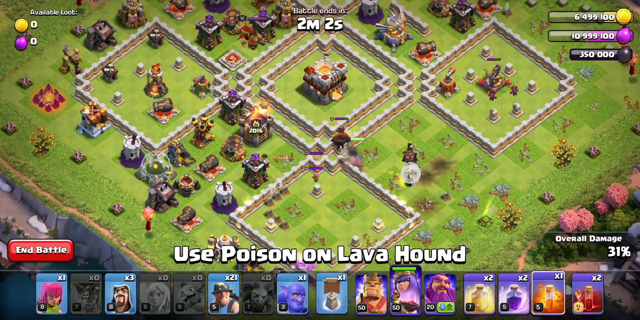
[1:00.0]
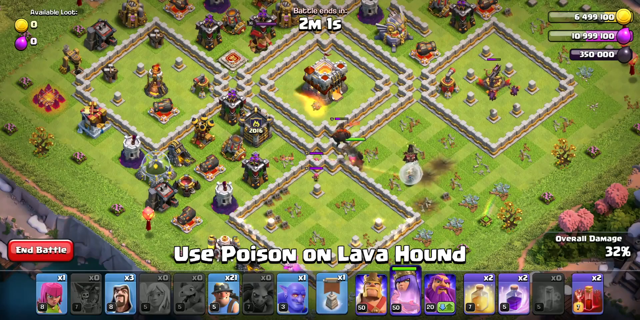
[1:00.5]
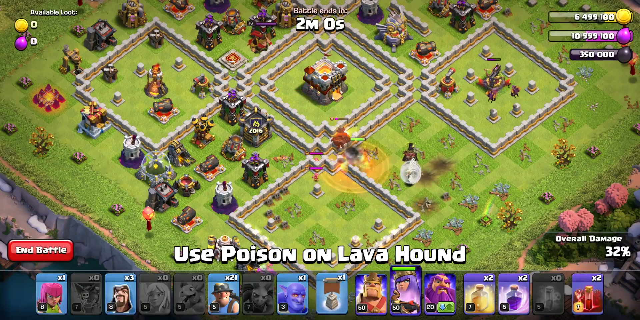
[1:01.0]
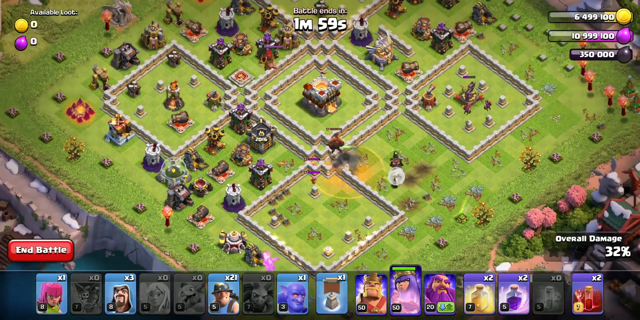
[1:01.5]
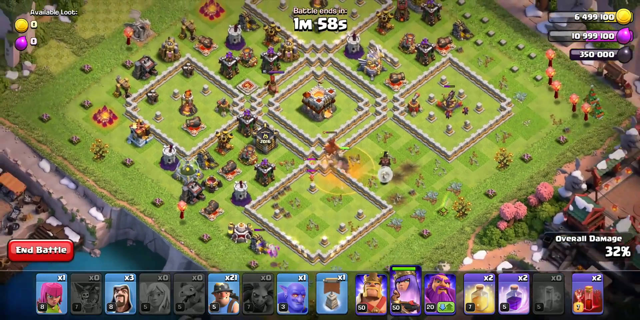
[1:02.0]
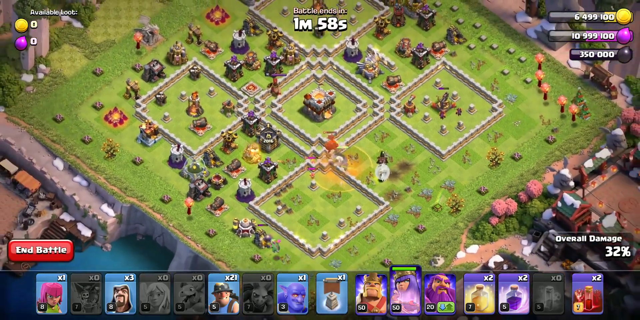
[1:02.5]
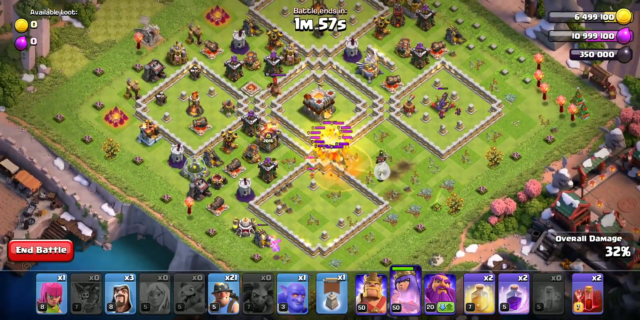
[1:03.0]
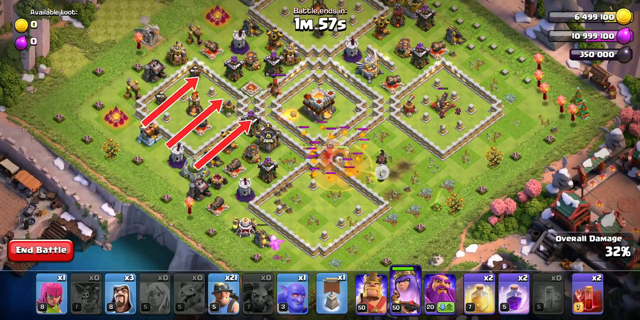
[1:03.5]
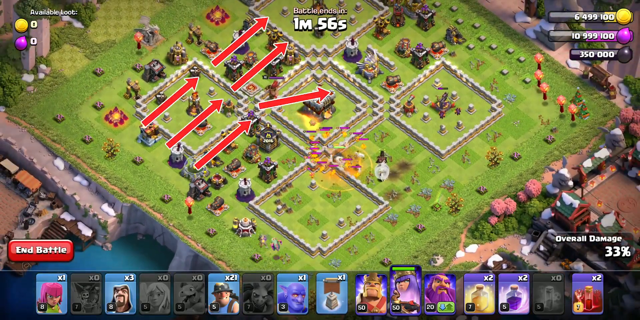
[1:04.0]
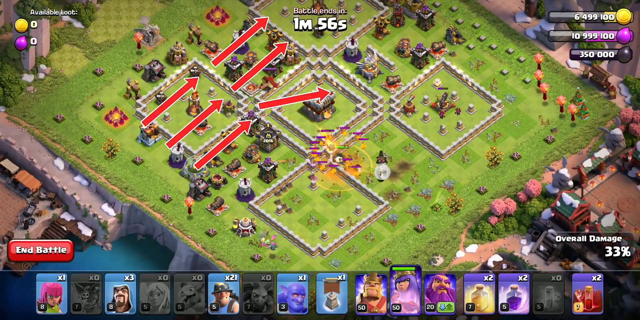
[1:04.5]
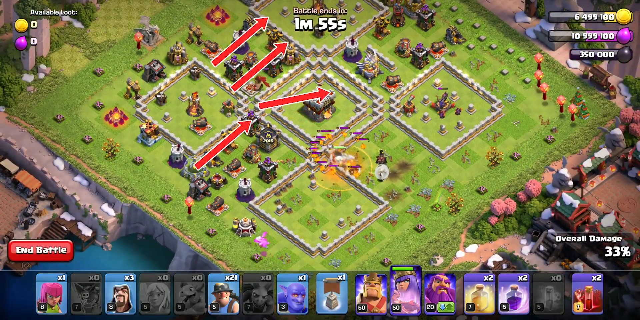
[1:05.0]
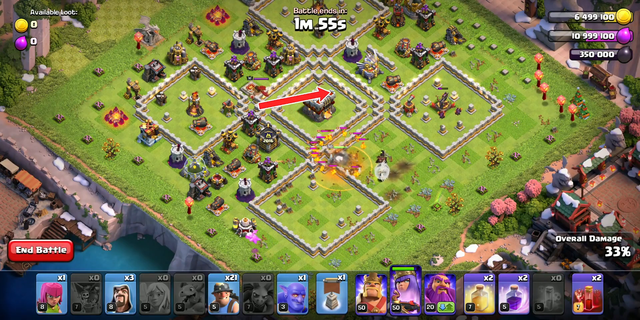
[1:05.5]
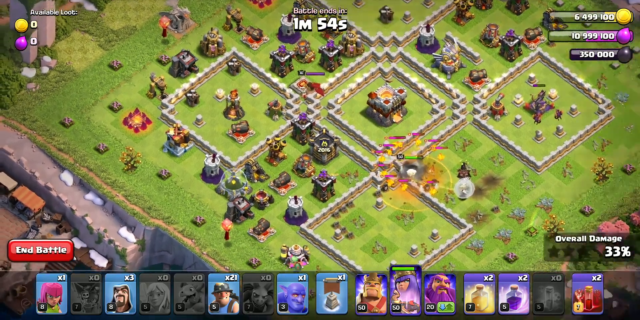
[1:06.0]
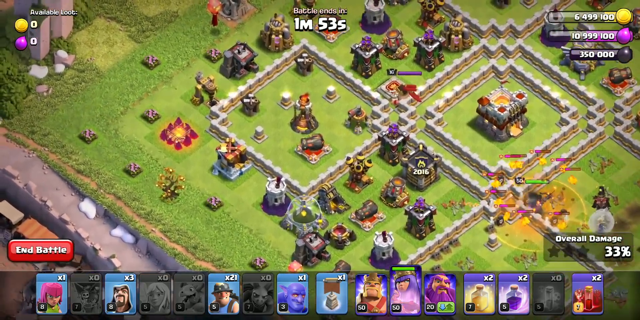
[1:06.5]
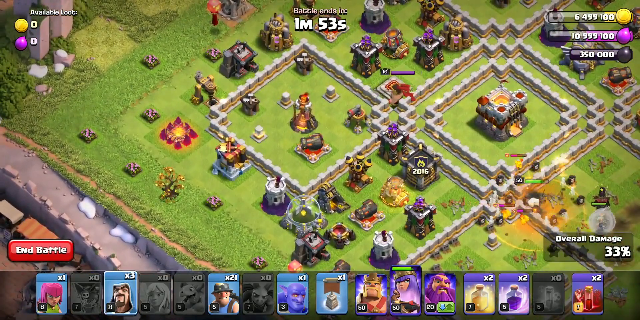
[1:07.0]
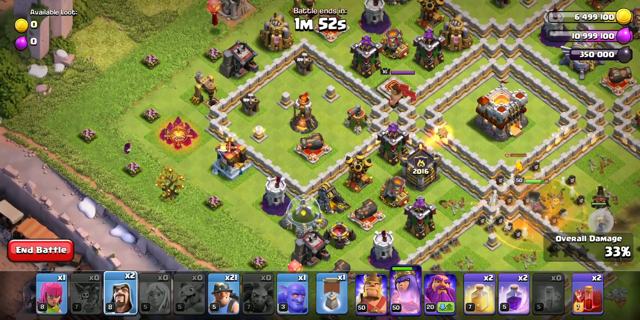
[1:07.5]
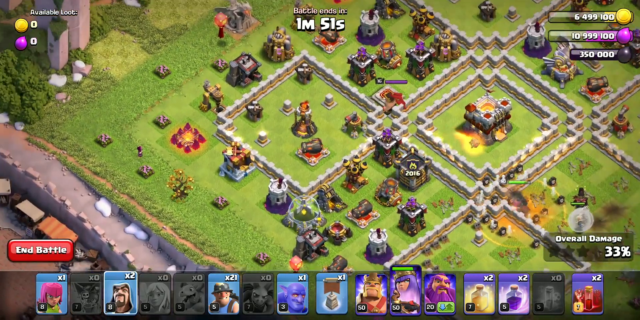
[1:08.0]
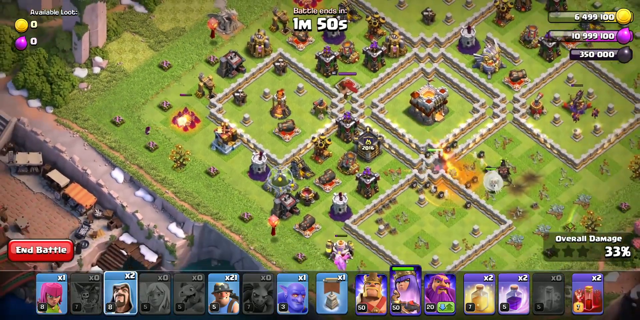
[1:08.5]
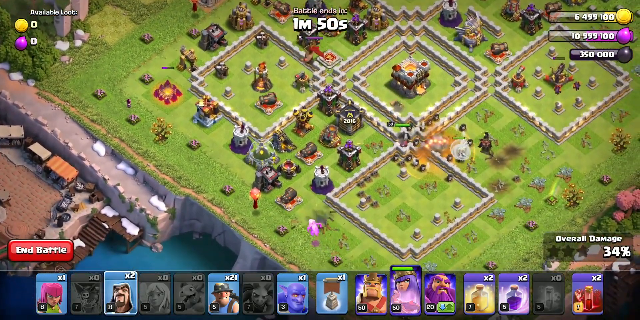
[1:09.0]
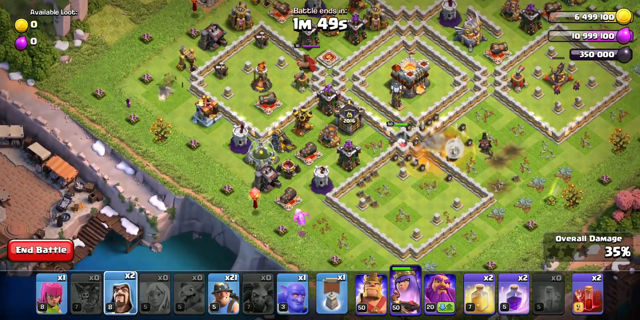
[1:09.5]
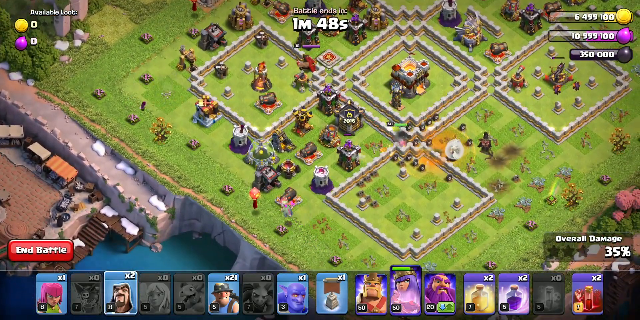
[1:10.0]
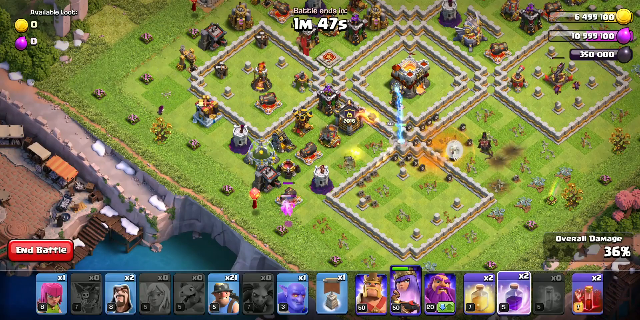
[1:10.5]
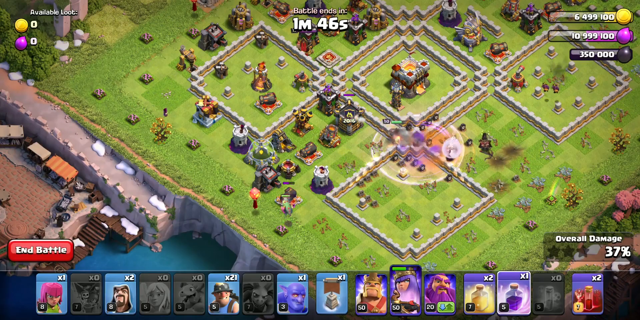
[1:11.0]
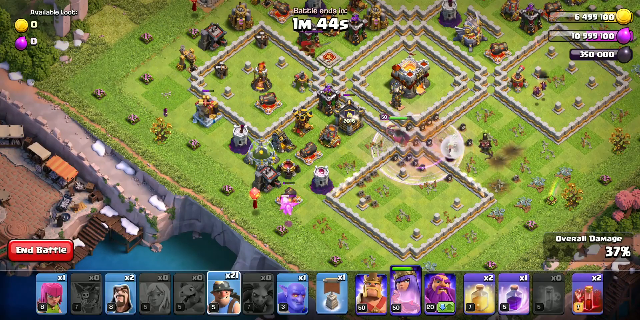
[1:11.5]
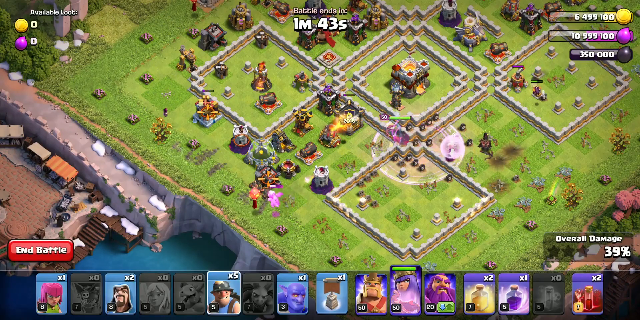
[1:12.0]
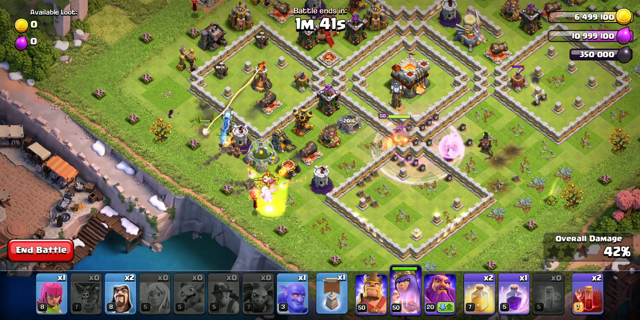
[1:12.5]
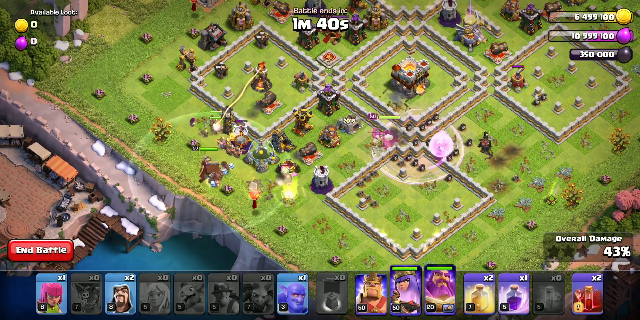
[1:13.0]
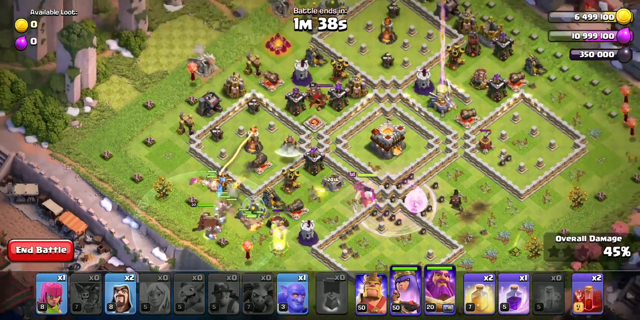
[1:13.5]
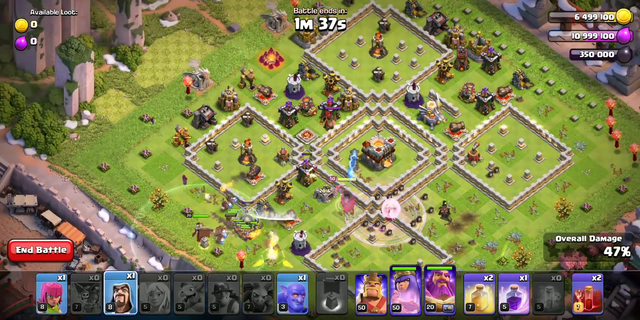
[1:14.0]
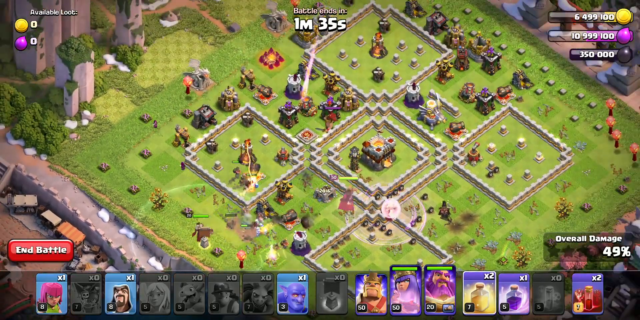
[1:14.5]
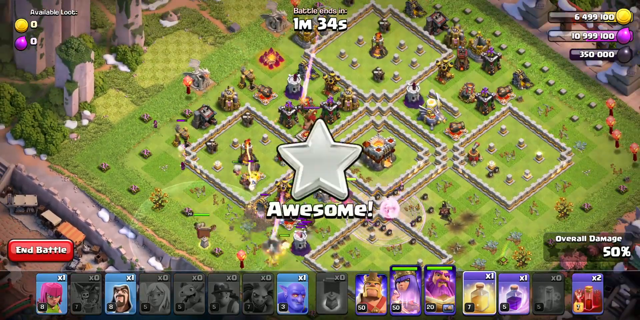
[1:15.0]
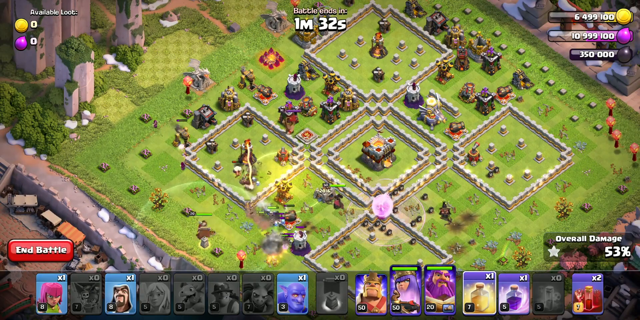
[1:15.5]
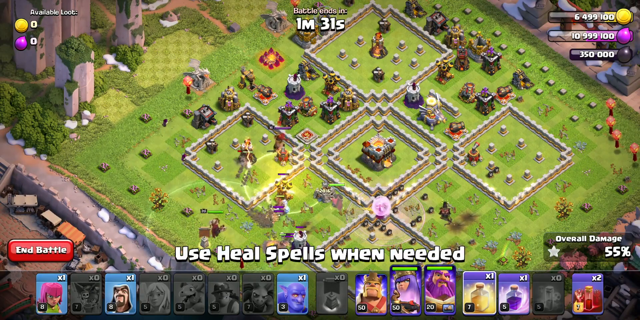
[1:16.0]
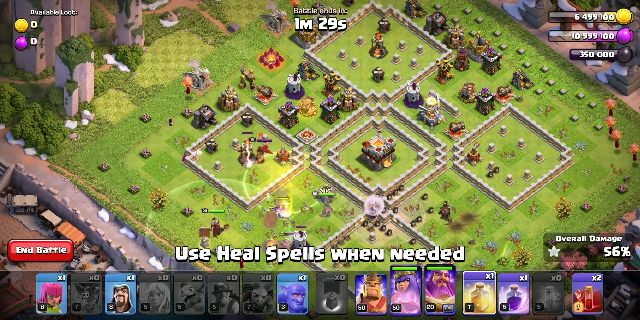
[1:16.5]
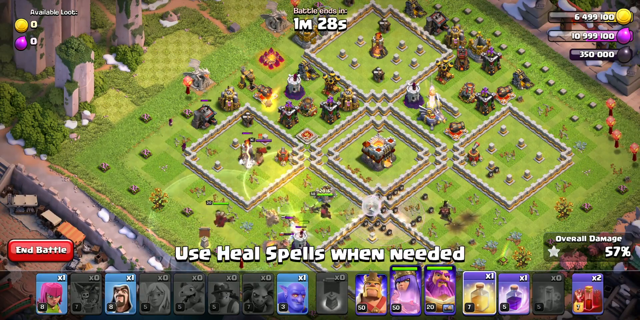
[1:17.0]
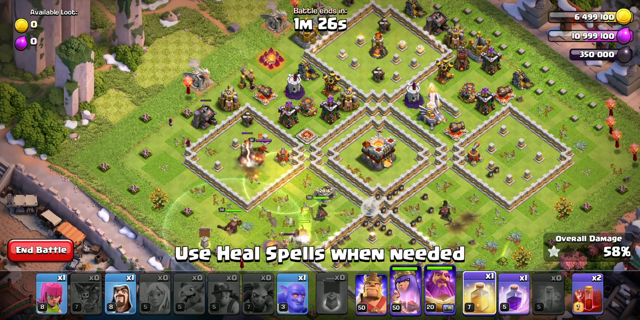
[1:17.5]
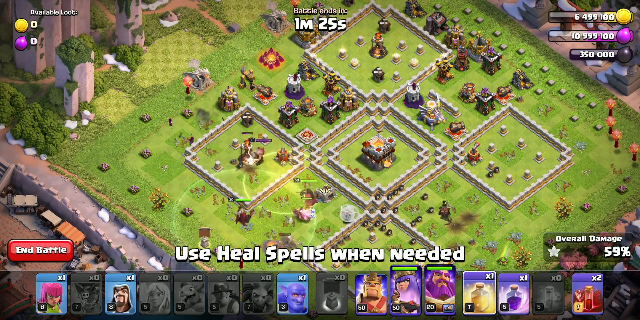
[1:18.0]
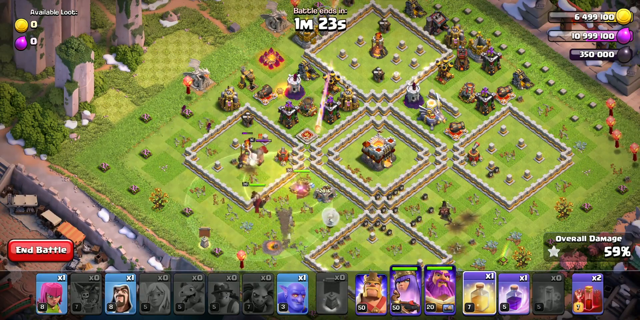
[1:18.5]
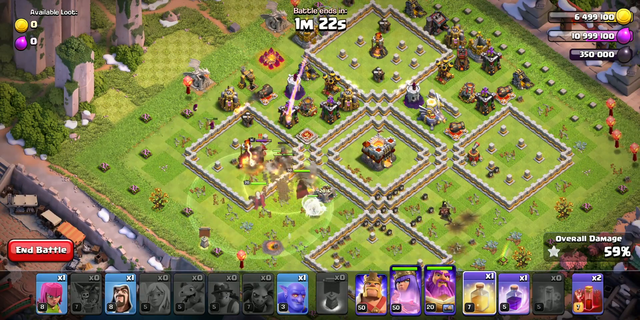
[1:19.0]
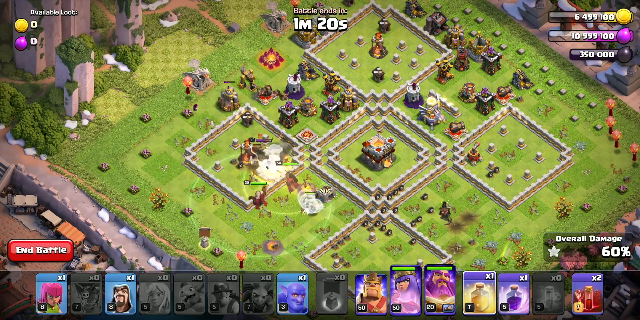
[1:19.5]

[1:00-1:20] After the Potion of Lava Hound, the player uses archers, goblins, ballers, baby dragons, barbarians and Super Minions, and several Canyon carts are used. The game timer winds down to around 1 minute and 45 seconds. More units destroy buildings, getting closer and closer to the cemetery. On the far right, the player has 1 star with a total of 61% damage; the star is small and silver. There is no available loot: the coins are still 0 and the red or purple goop is still 0. The end battle option, a red highlighted rectangle, is still on the far left.